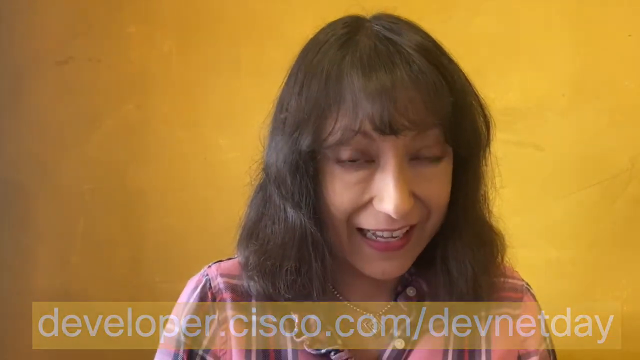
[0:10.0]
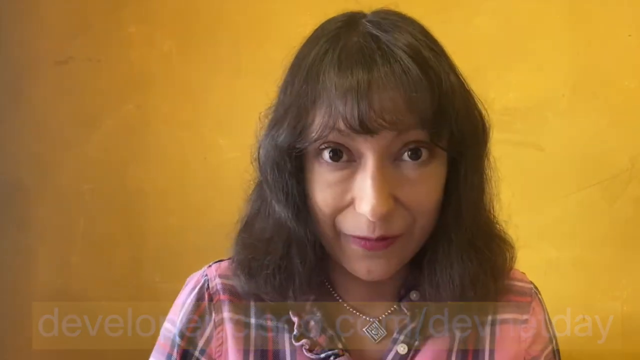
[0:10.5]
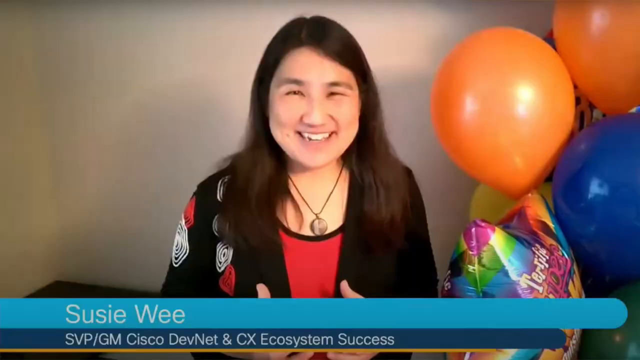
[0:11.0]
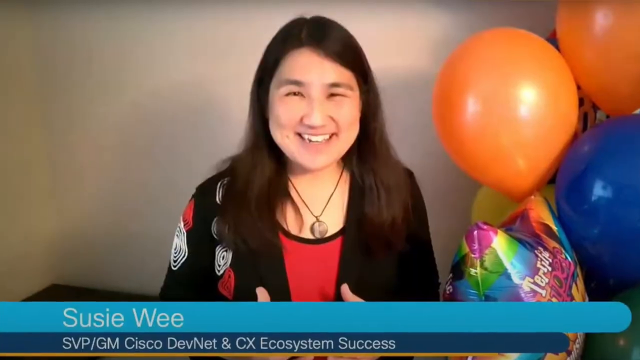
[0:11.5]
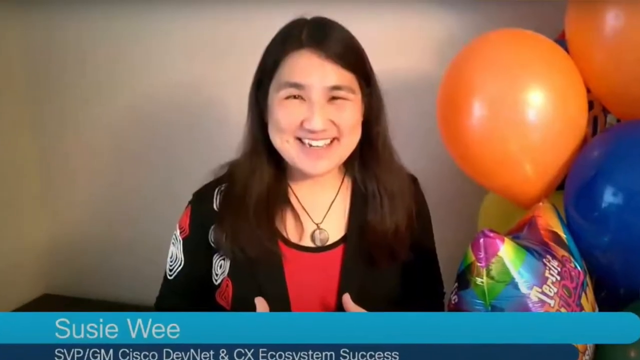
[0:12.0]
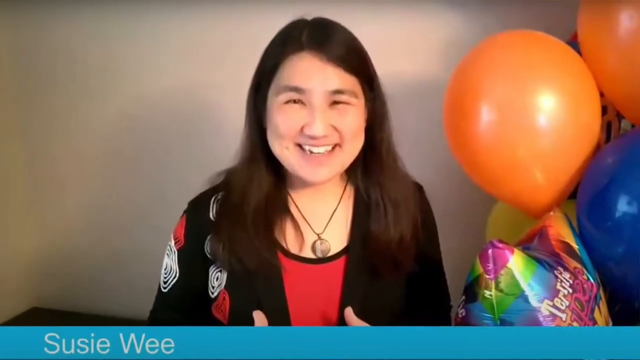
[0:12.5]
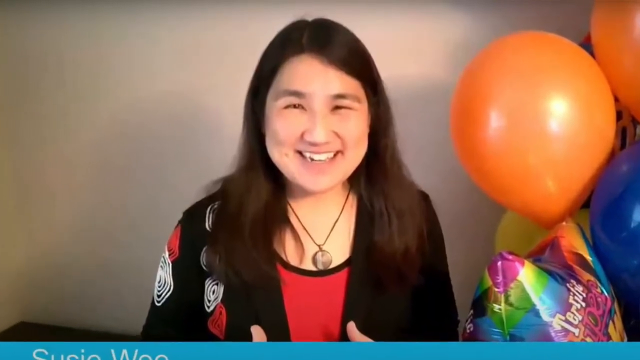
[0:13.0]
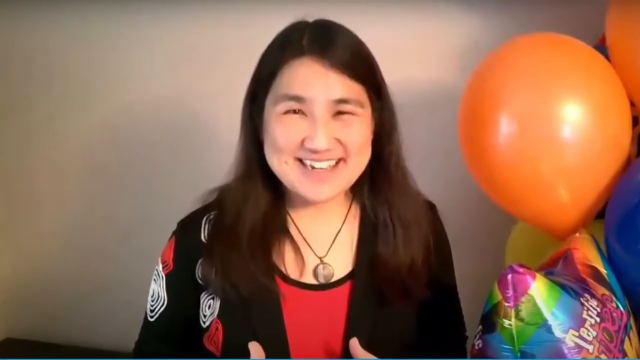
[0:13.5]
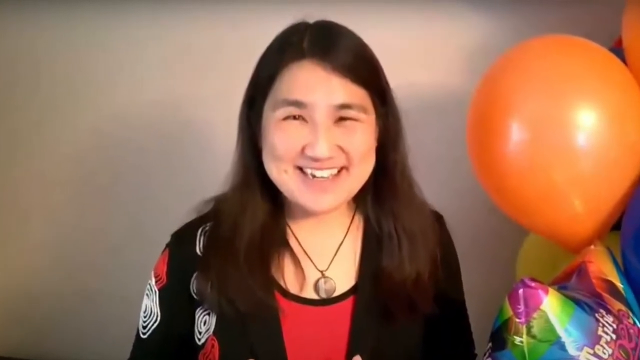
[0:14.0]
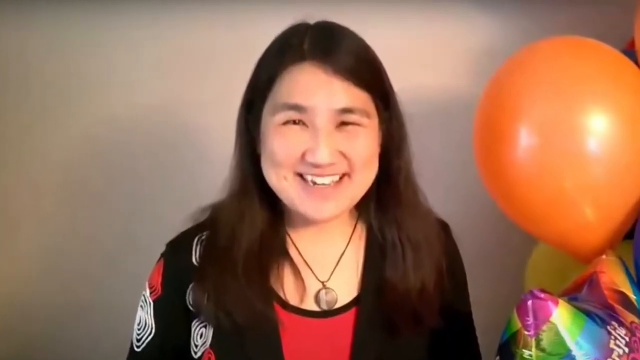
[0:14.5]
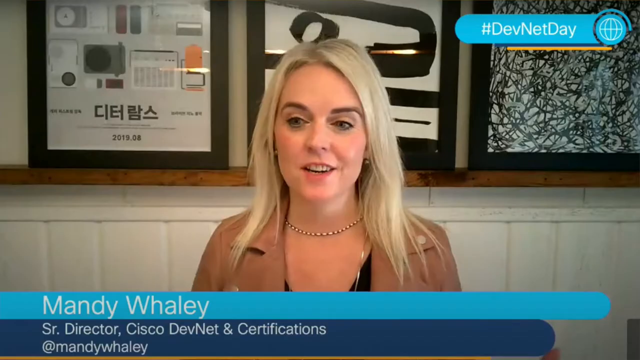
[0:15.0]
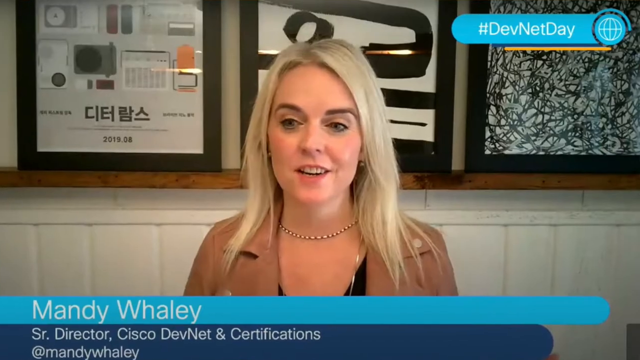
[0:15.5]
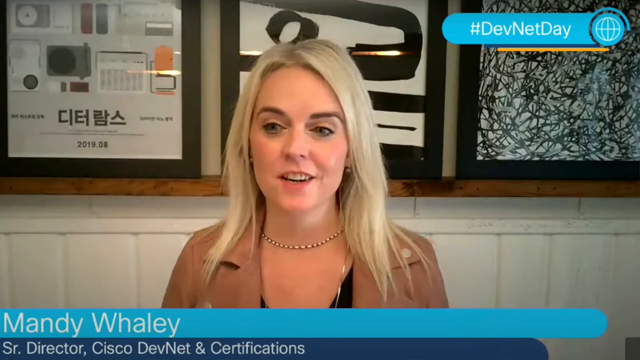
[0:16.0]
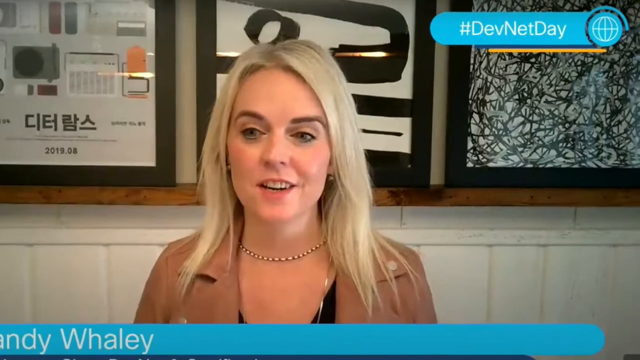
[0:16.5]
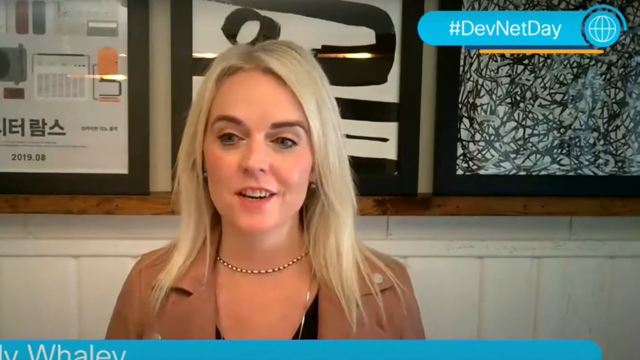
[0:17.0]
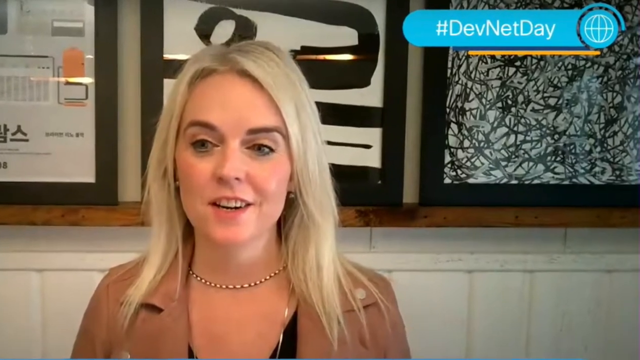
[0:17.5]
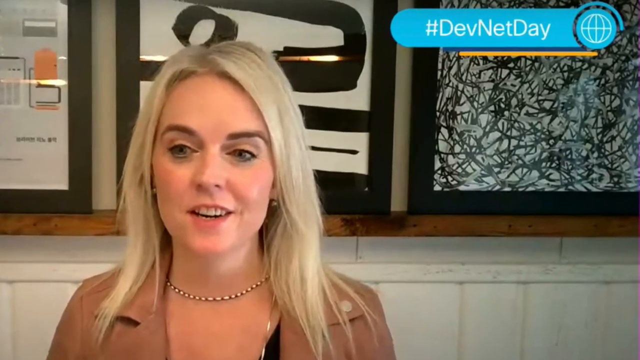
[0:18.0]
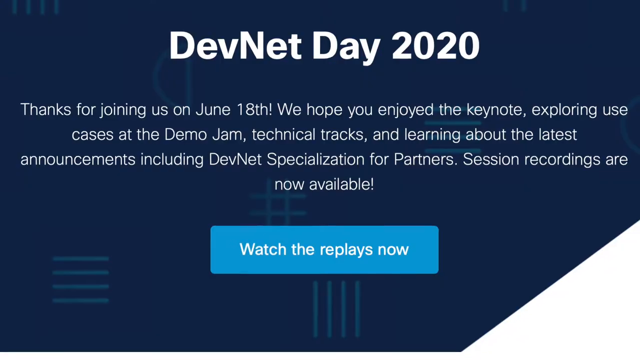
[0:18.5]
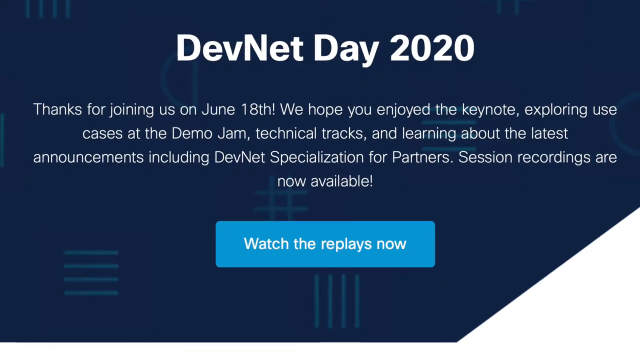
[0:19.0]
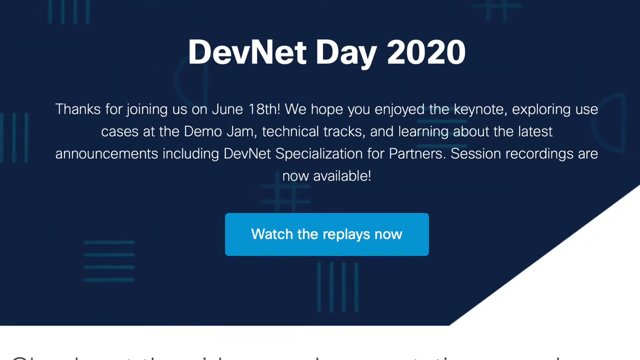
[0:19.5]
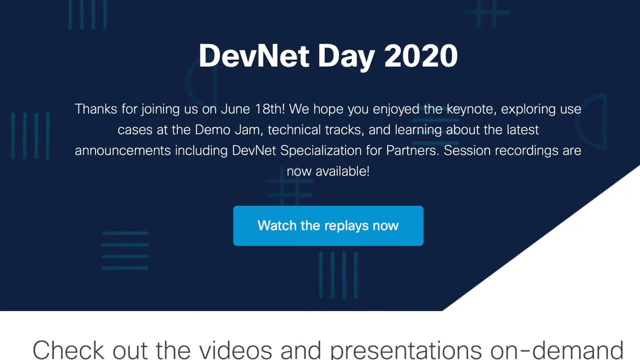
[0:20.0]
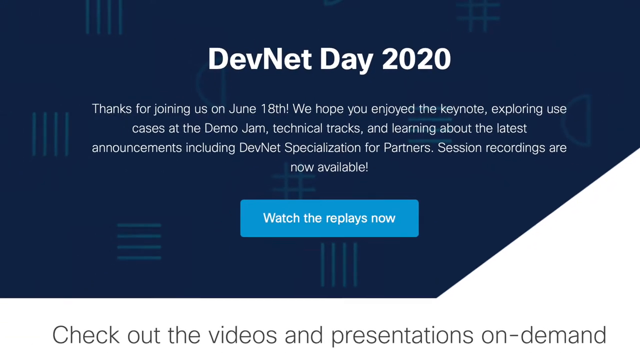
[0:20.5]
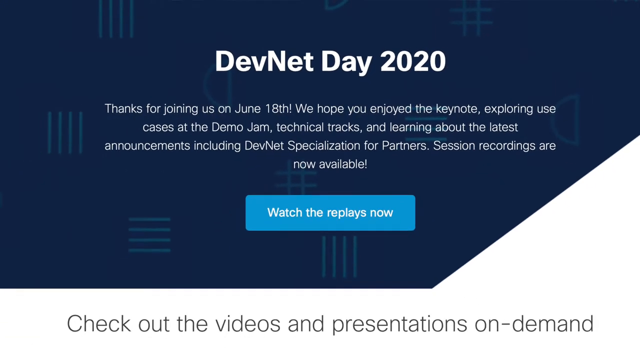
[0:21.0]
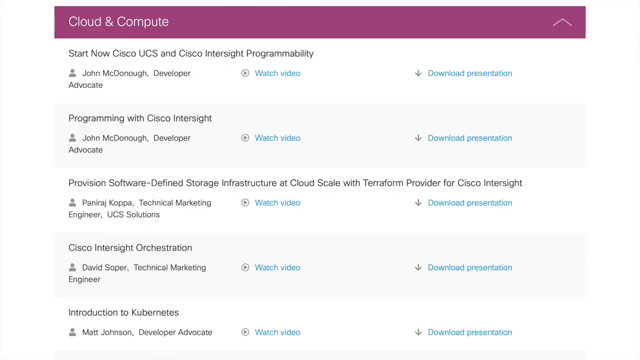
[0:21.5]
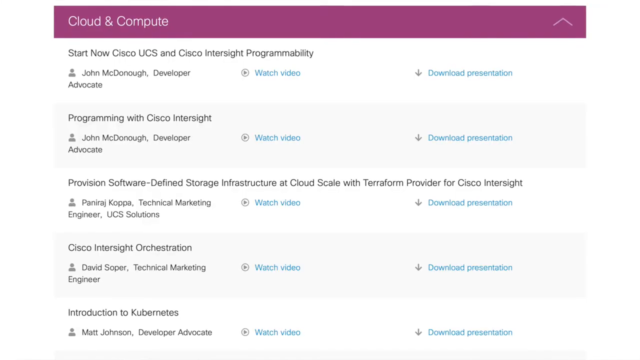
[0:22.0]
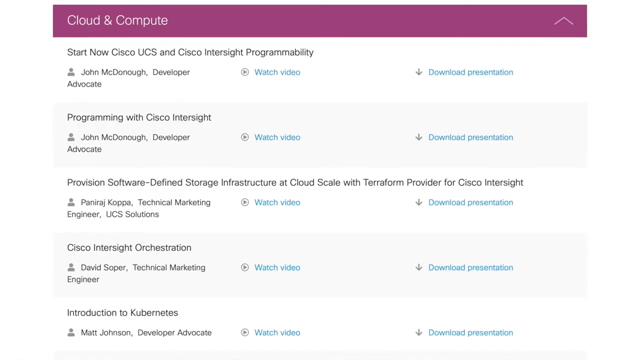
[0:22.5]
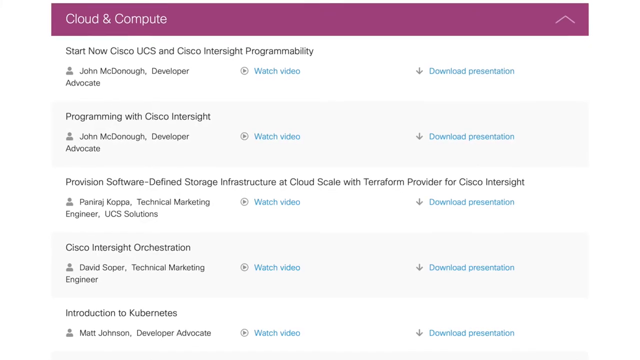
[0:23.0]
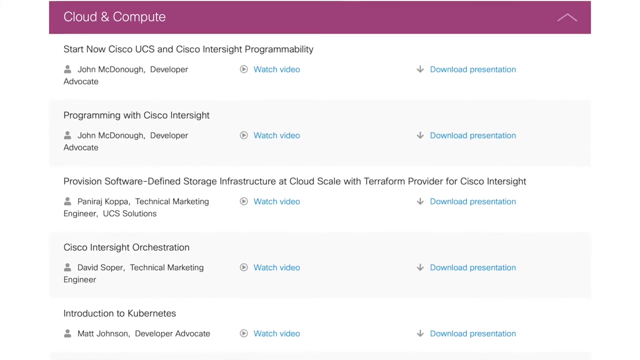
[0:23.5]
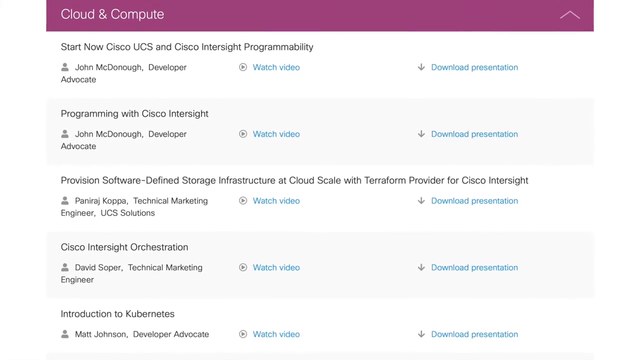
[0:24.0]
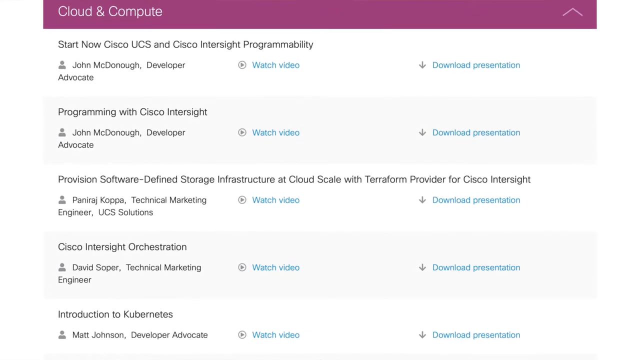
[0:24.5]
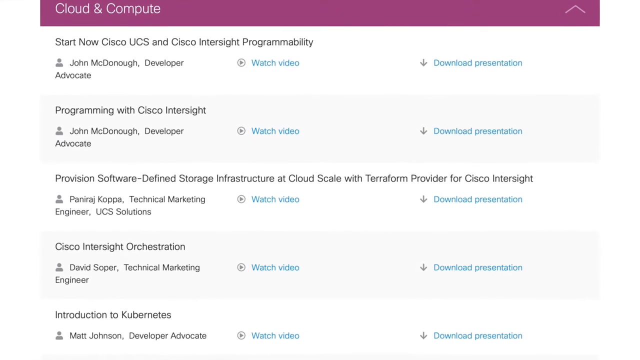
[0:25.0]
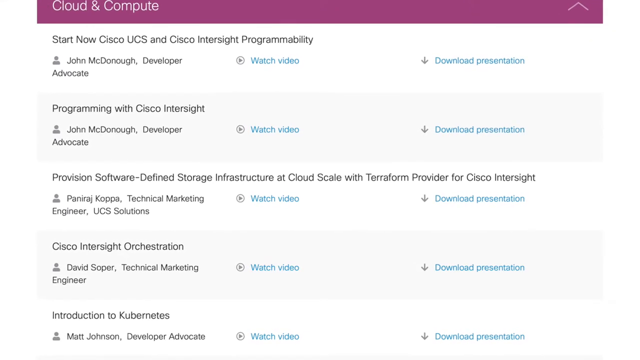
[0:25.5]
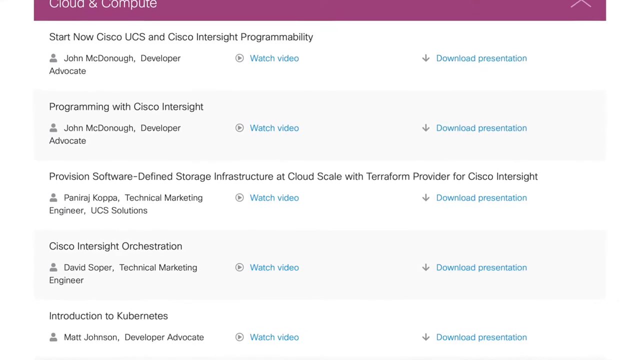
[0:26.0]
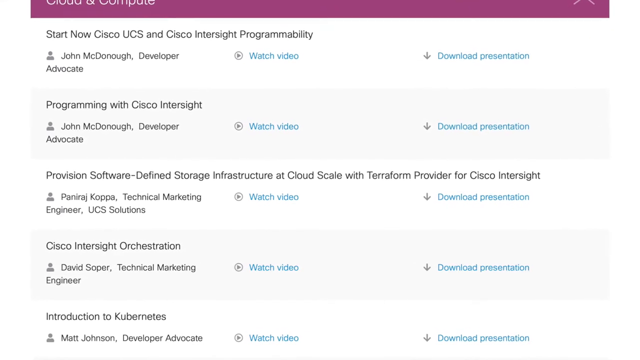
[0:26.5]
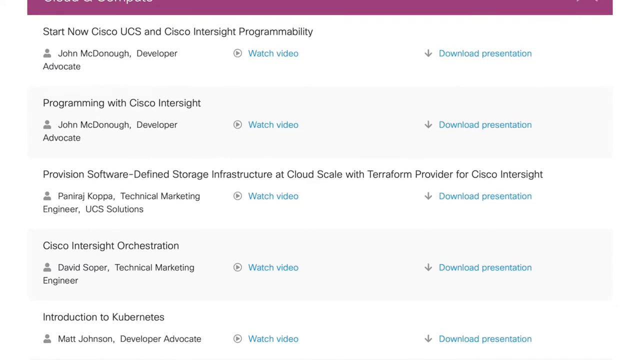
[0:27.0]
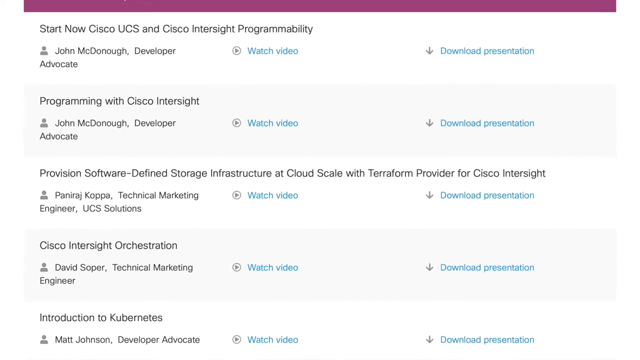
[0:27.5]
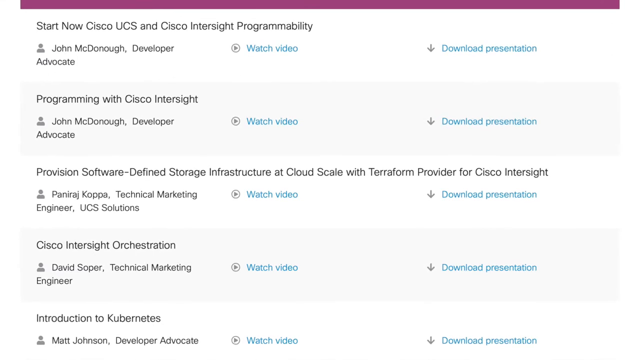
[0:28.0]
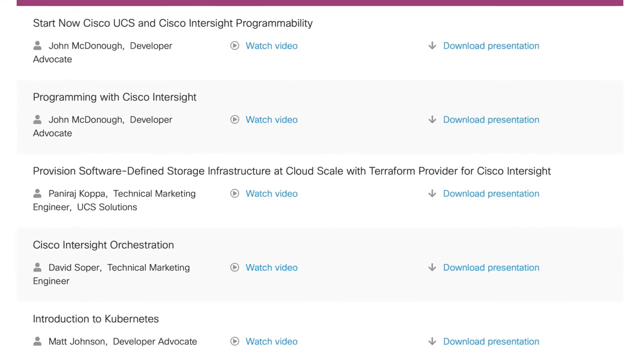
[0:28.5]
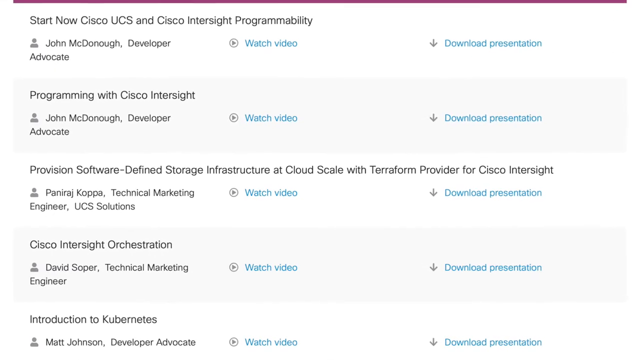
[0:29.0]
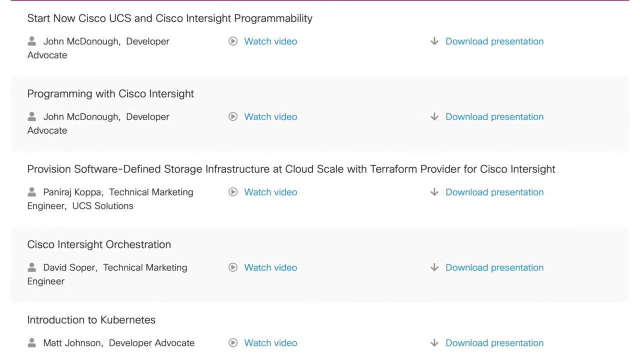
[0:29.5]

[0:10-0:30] A woman with long dark hair smiles and looks into the camera, with balloons on the right side. She looks toward the left as she speaks and moves to the right. The shot pans to another woman with long brown hair who wears a necklace, a red top, and a red jacket with white and red swirled areas. To her right are balloons: two orange, one blue, and a multicolored mylar balloon. The camera pans in on her face. A page about Cisco UCS and Cisco Intersite programmability appears, listing multiple names. Another woman with blonde hair looks toward the left side of the screen, with "#DevNet Day" in blue behind her. The next screen reads "DevNet Day 2020. Thanks for joining us June 18th. Watch the replays now."